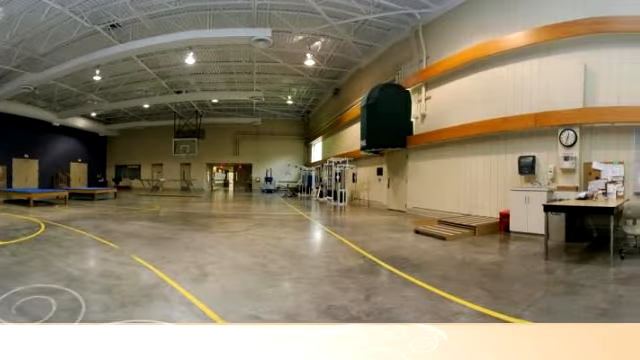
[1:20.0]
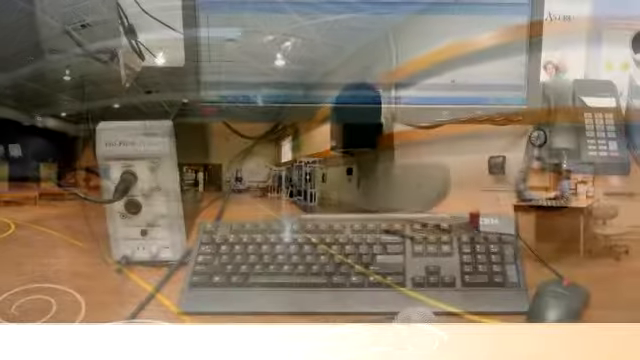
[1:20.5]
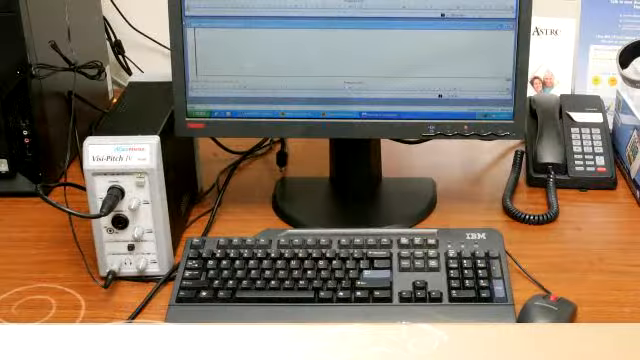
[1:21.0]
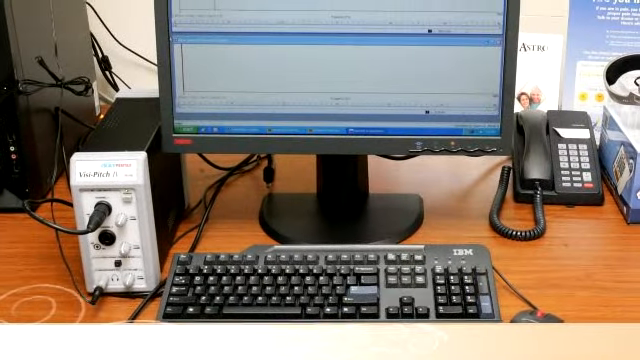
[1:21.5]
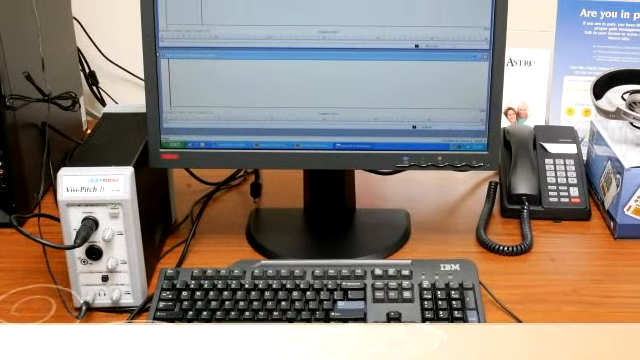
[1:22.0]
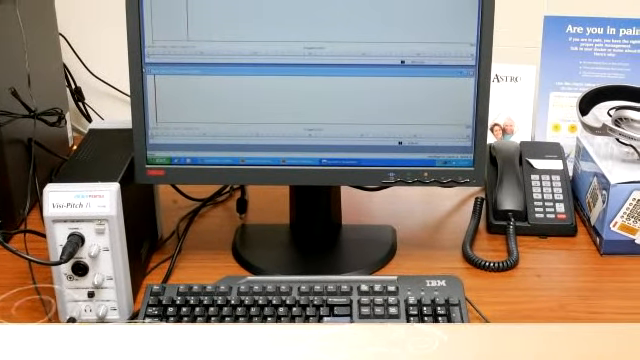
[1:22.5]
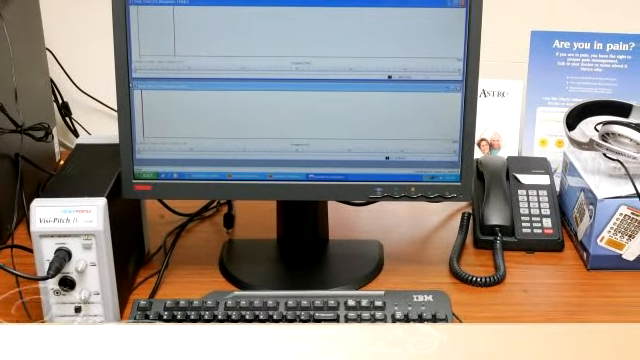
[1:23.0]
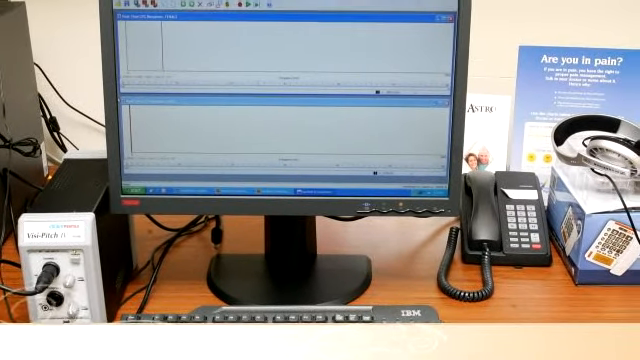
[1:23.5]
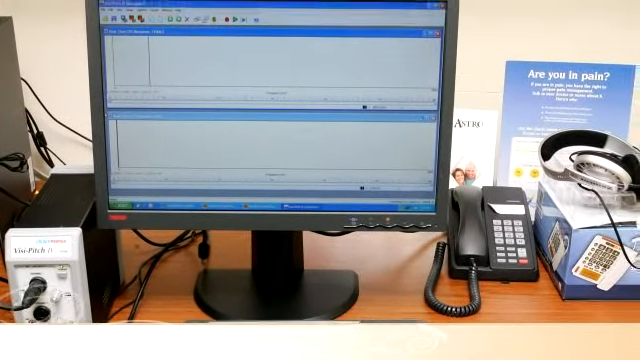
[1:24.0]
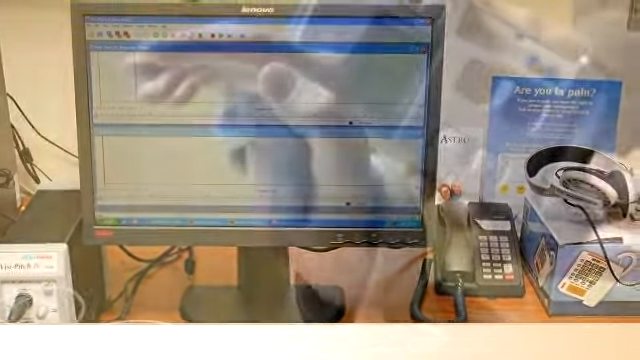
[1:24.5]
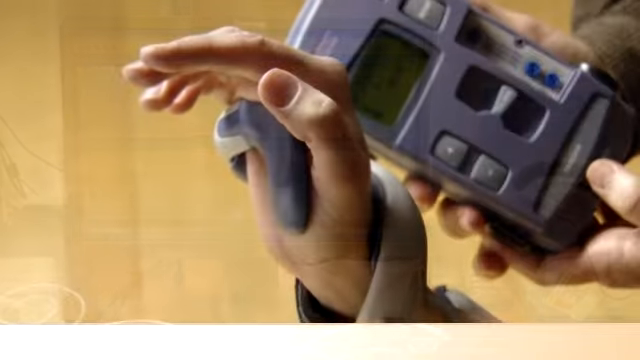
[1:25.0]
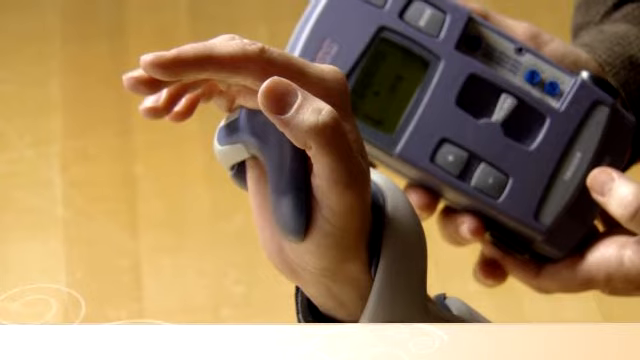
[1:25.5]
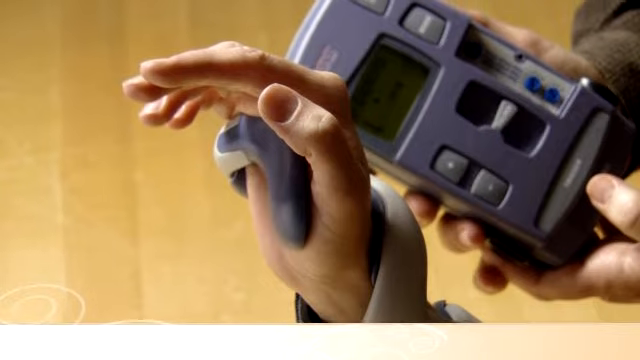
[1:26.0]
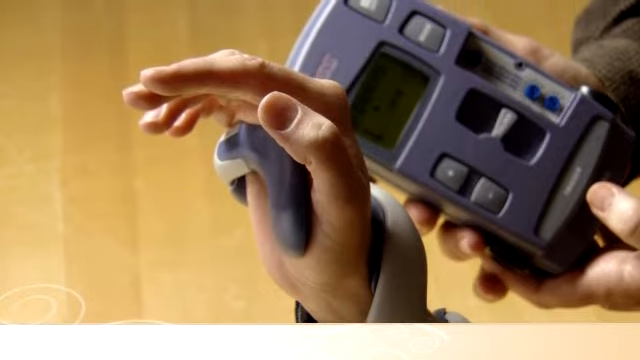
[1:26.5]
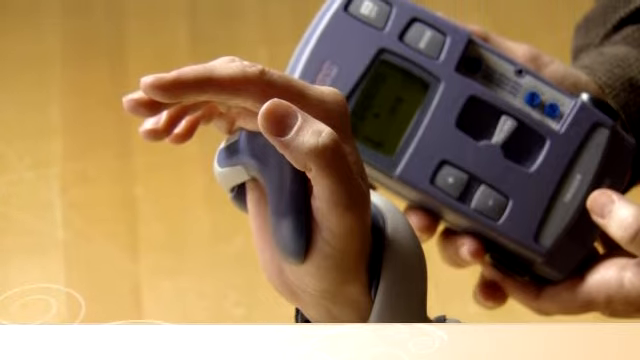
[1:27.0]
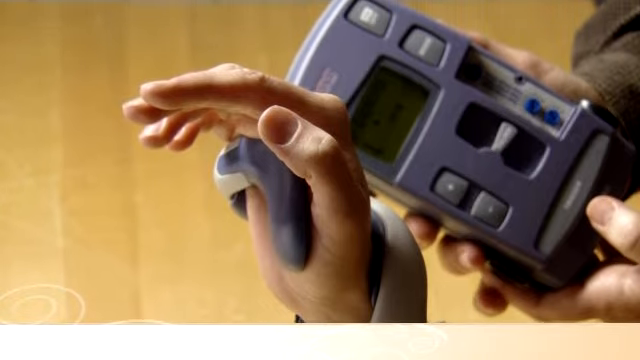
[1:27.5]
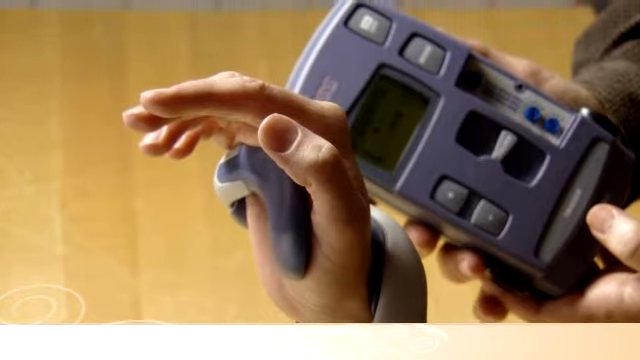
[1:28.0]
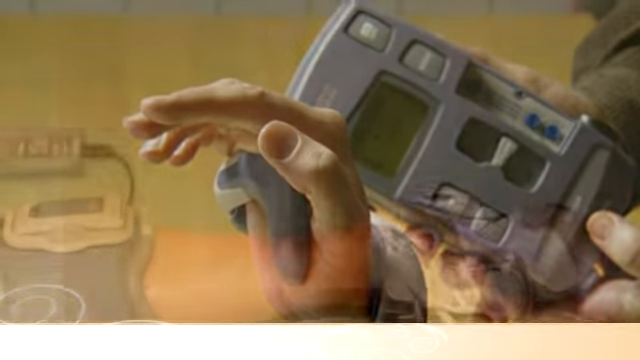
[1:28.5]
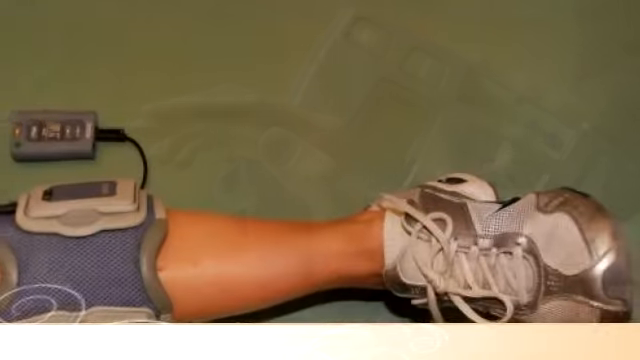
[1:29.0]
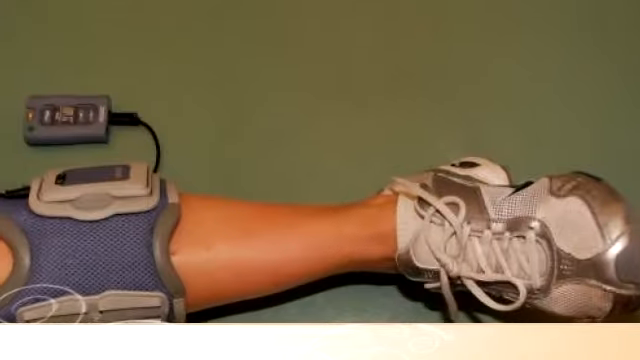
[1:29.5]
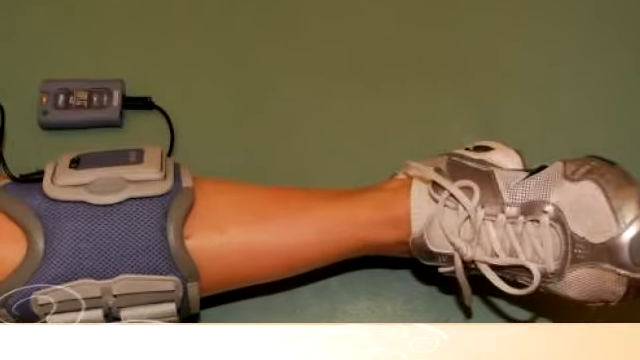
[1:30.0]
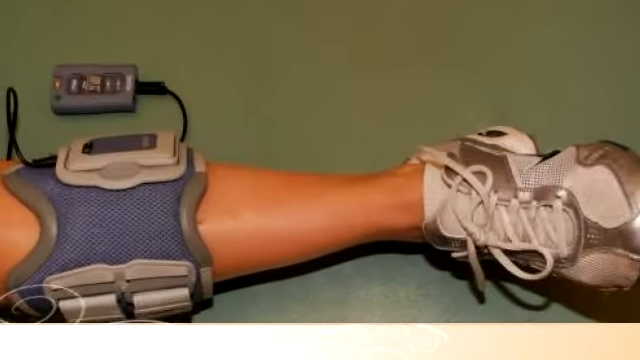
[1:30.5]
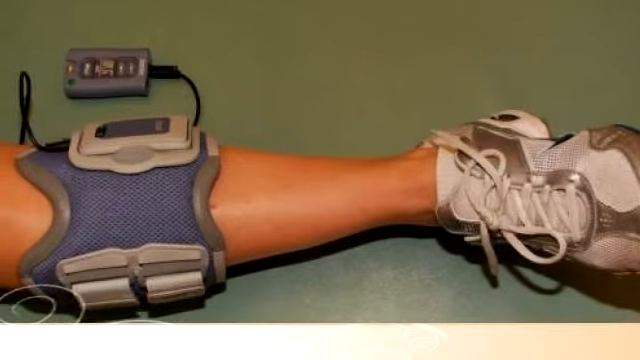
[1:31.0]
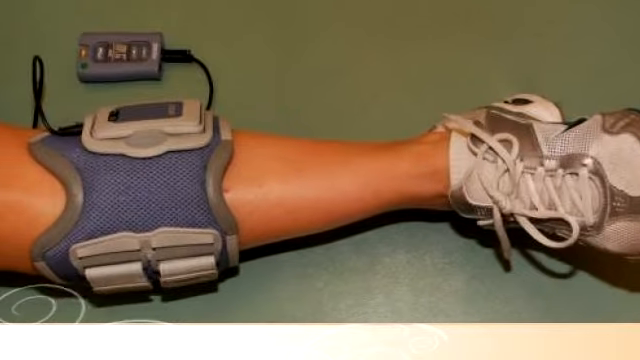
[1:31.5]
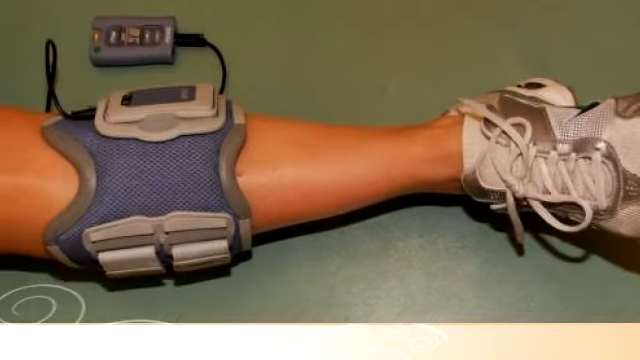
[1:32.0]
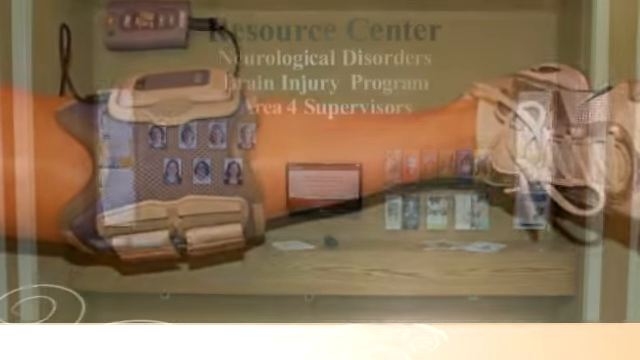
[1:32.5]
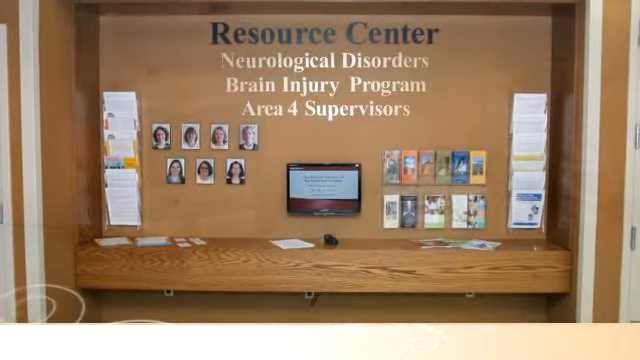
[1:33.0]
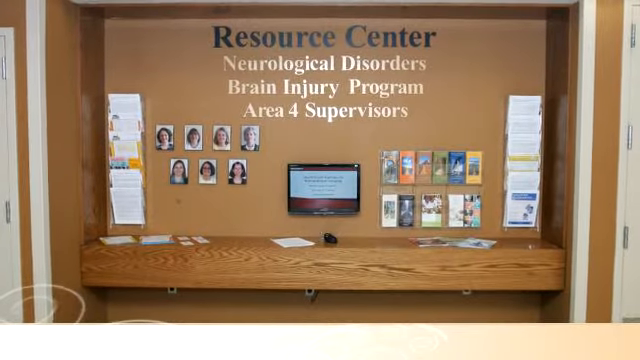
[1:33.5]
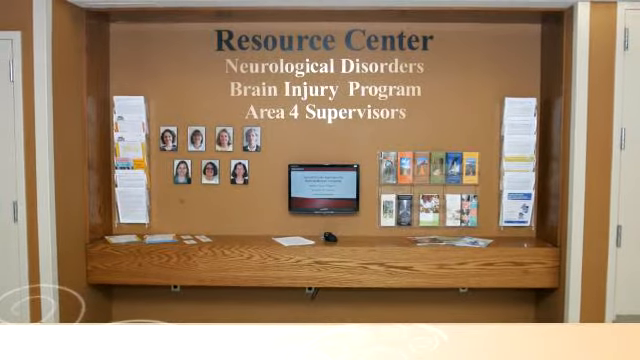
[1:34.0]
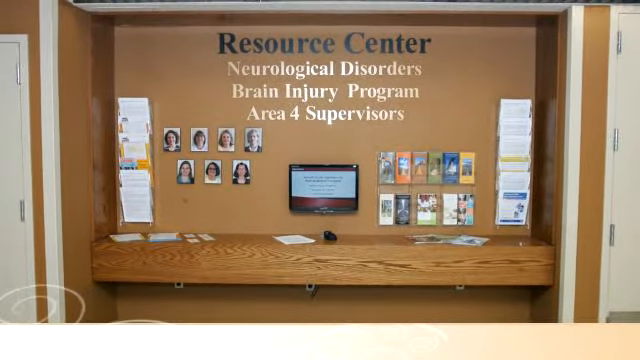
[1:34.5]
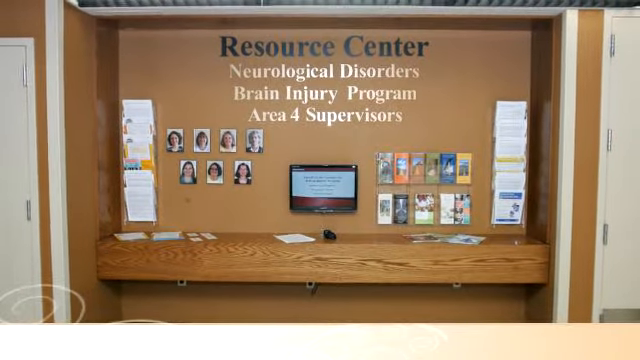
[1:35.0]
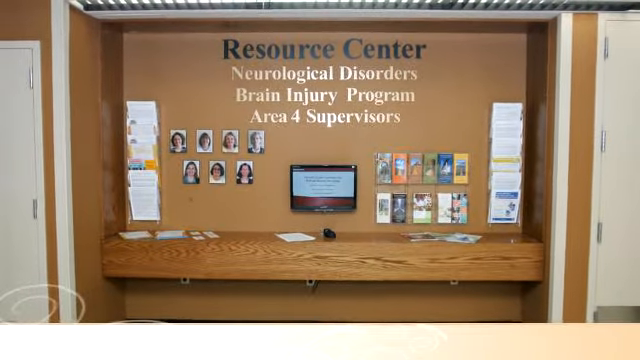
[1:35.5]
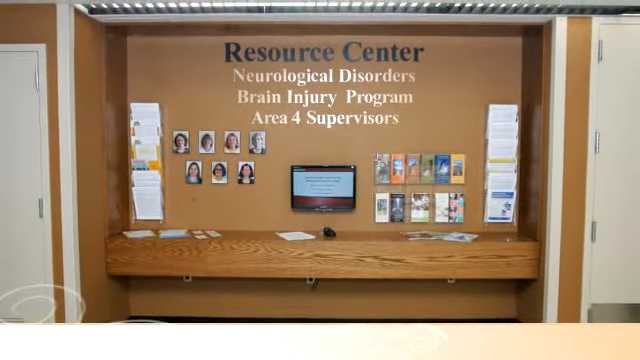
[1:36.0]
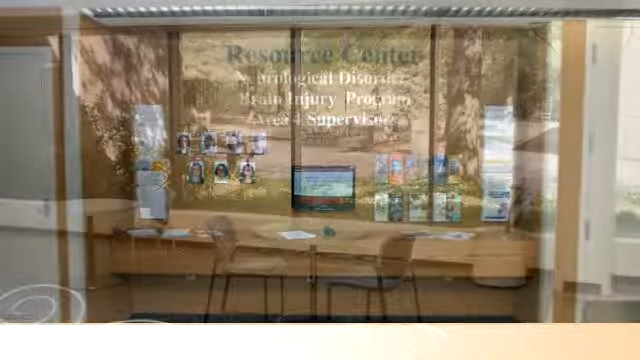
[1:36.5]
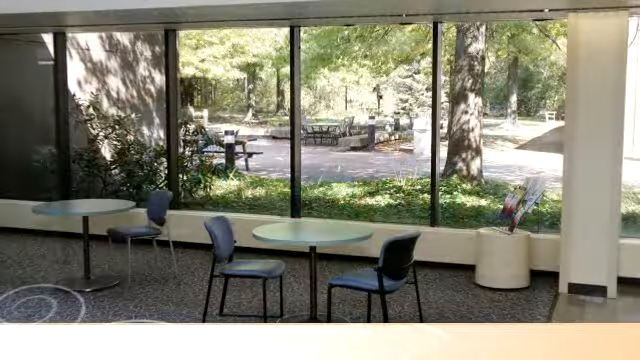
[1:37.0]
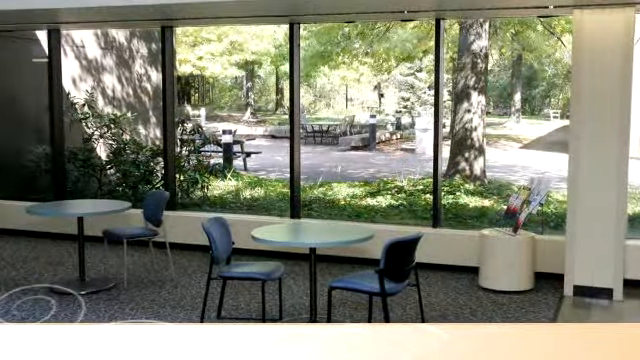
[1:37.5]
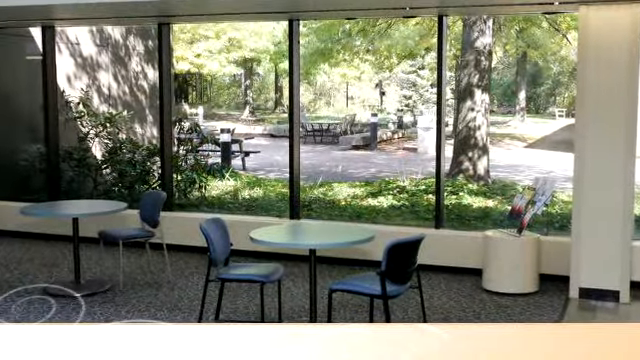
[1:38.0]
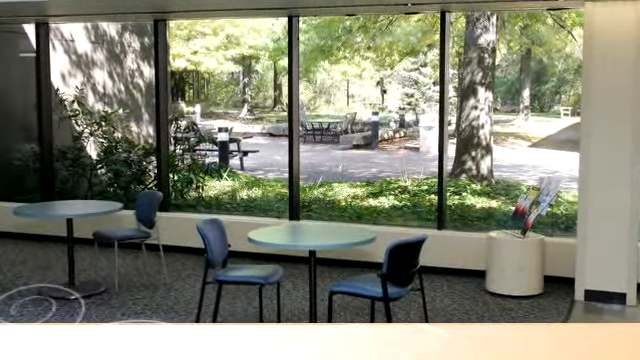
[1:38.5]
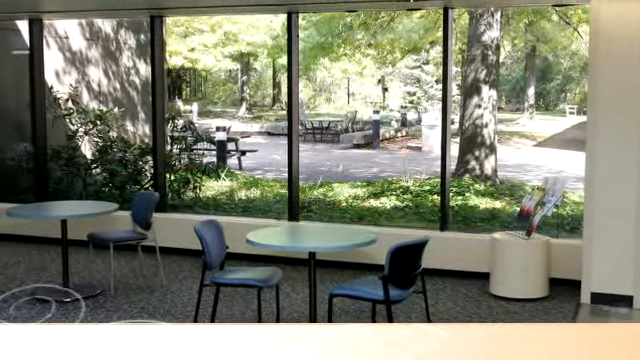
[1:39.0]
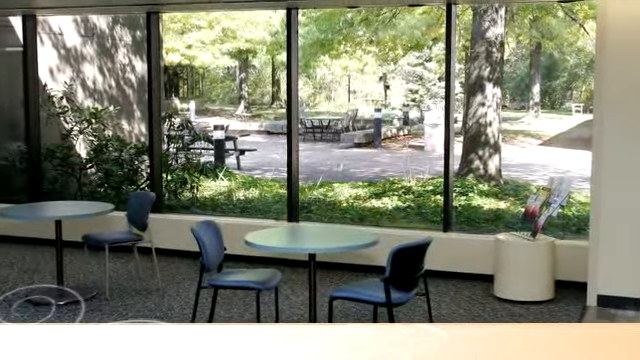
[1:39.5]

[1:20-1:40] The photo of the gymnasium appears before the video phases to a desktop with a keyboard, a computer monitor and a device next to it called a VisiPitch. On the other side is a telephone, some reading material that reads "are you in pain," and a pair of headphones. The camera phases up to a patient's hand with some sort of stimulus device in his palm, while another set of hands holds the controllers for the device, almost as though the patient is being helped with some sort of therapy. The next photo shows a leg in a similar device, a cuff with sensors and a control on the outside. The leg appears to be a woman's; she wears white Nike sneakers with a gray swoosh and silver accents. The camera pans up a bit, almost to the knee, before phasing to a large built-in wall inset with a wooden desk at the bottom. On the wall behind it hang a small television monitor and two racks holding papers of information for patients. At the center are photos of a series of hospital staff members, and more written information is on the desktop.